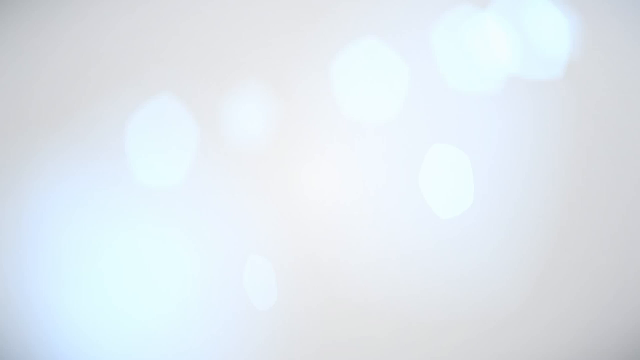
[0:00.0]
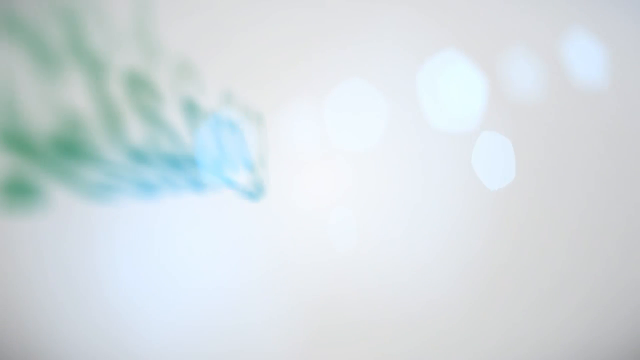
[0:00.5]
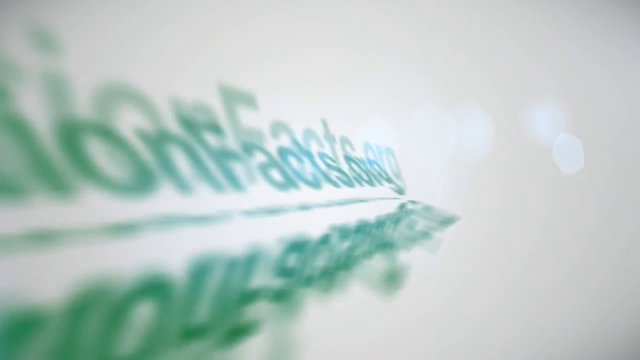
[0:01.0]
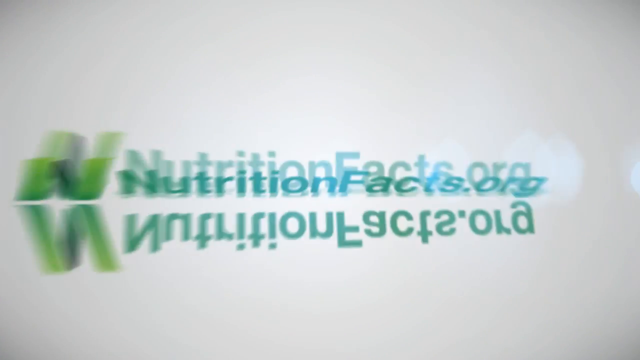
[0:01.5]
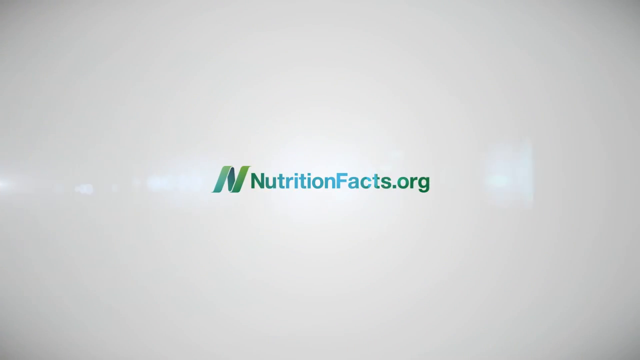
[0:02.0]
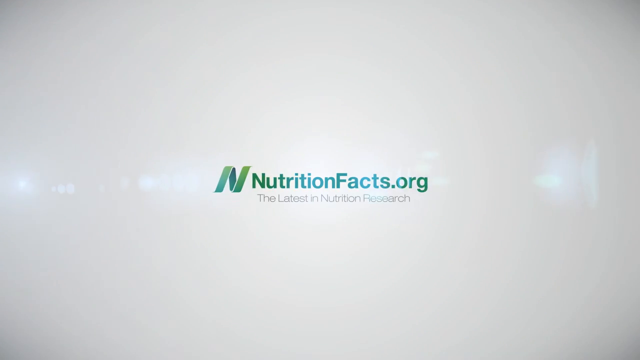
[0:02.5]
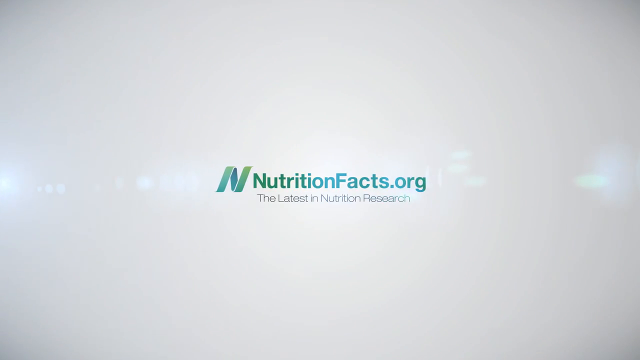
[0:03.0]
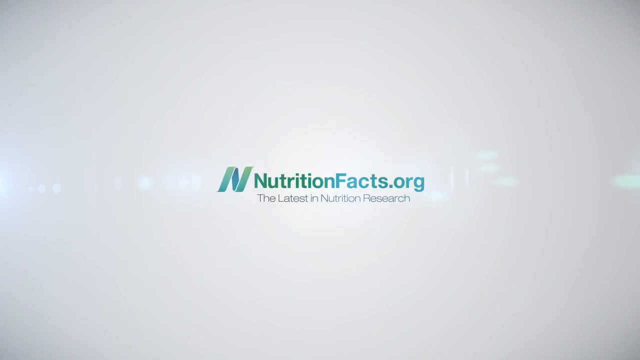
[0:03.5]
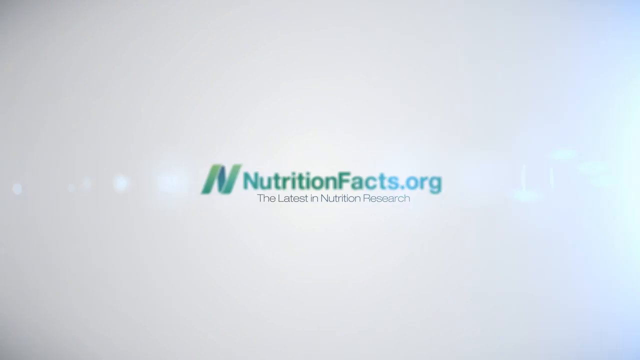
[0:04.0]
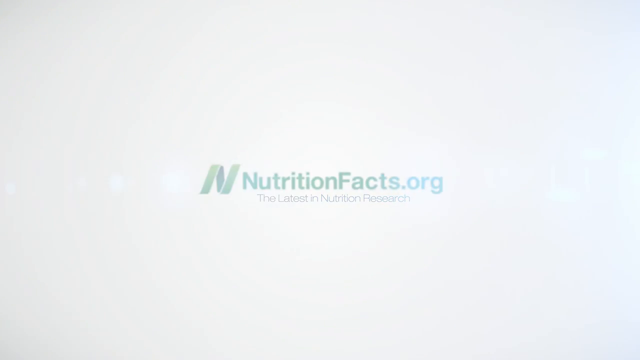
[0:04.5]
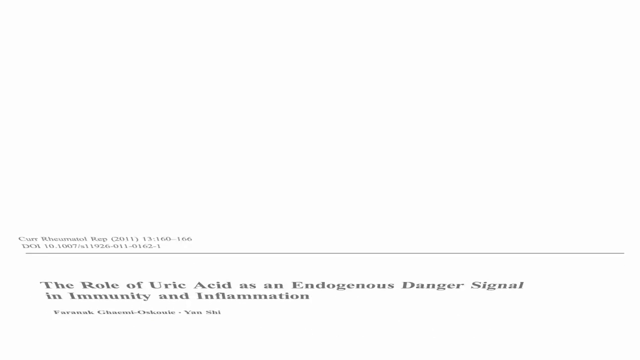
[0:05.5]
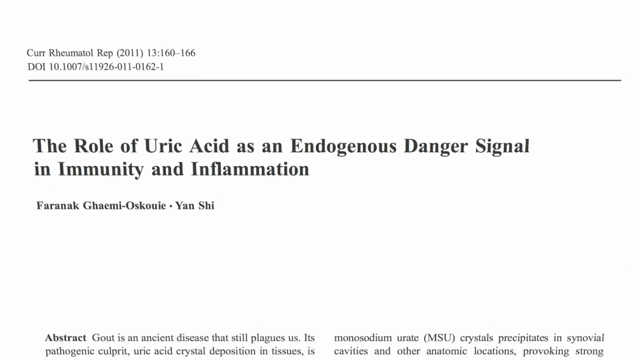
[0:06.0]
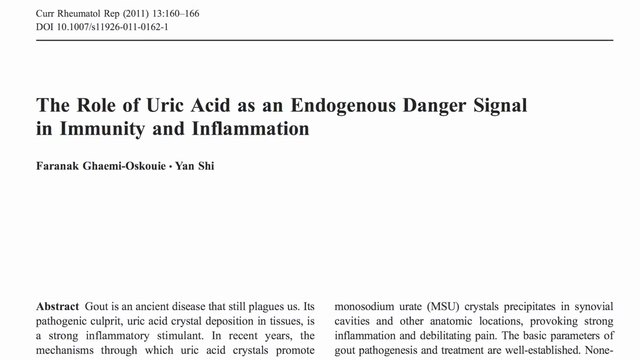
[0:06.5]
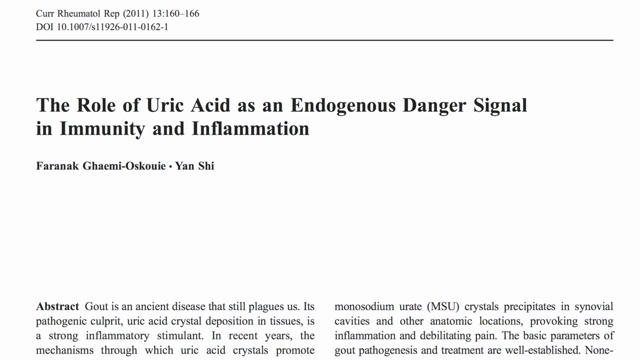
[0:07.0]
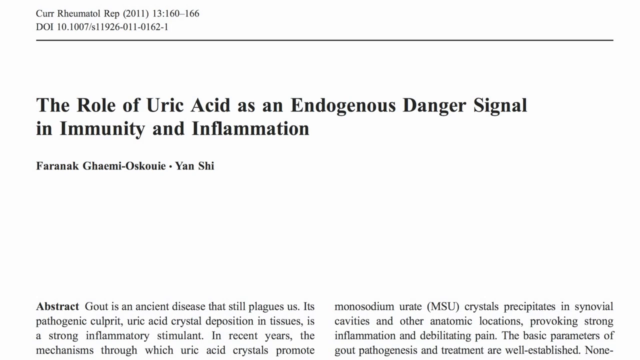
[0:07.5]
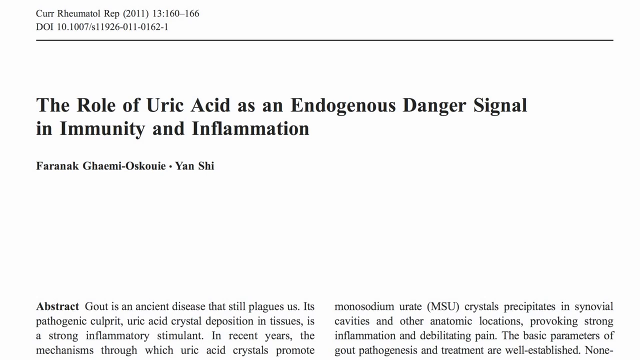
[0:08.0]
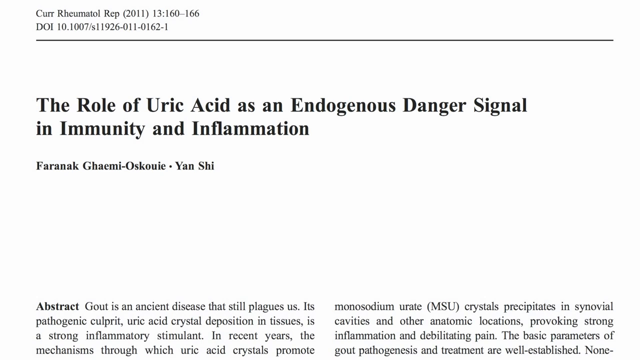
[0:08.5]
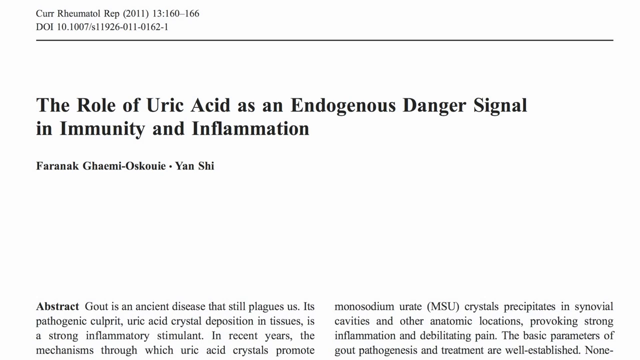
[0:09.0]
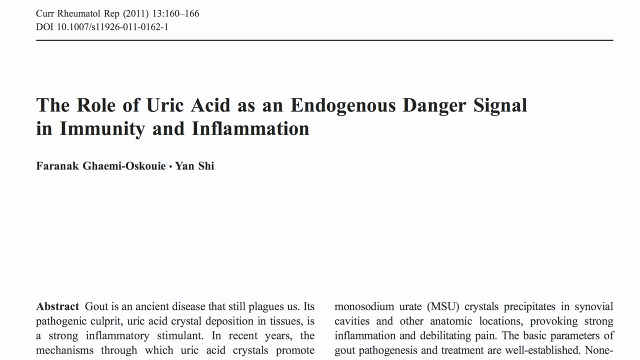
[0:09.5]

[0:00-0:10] The video opens on a white background, and then "nutritionfacts.org" pops up with "the latest in nutrition research" below it. The screen then turns to what looks to be a paper. At the top of the paper it reads "the role of uric acid as an endogenous danger signal in immunity and inflammation," and there is some writing at the bottom of the screen. Names that possibly belong to the paper's authors come up. At the top of the page there is some additional information, including what look to be possibly time stamps and the date 2011.